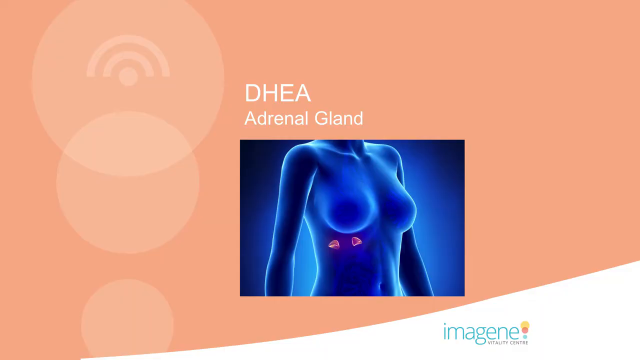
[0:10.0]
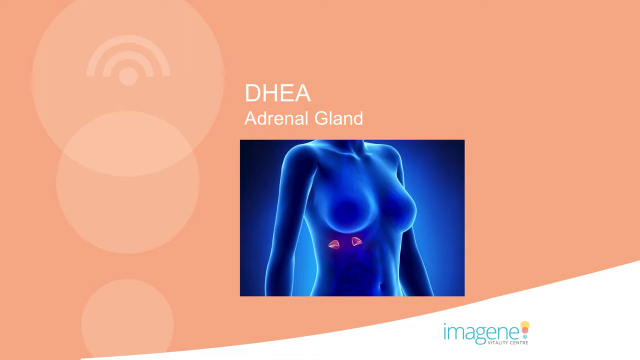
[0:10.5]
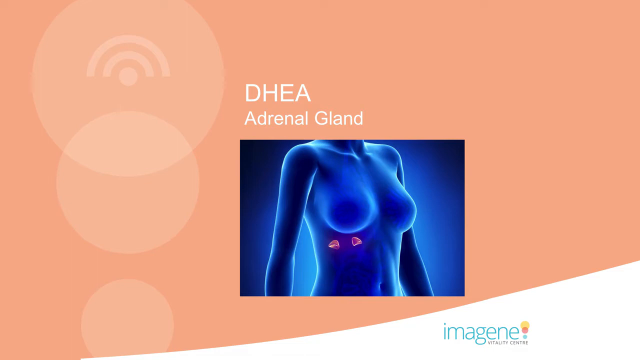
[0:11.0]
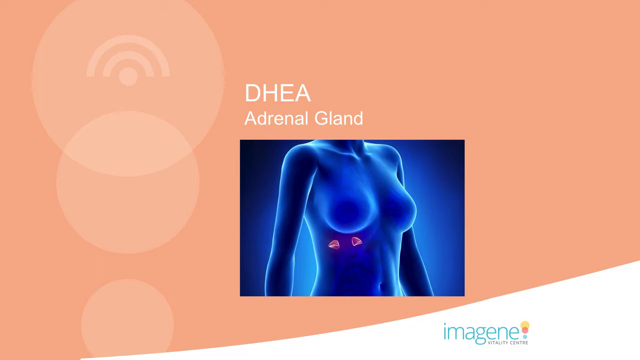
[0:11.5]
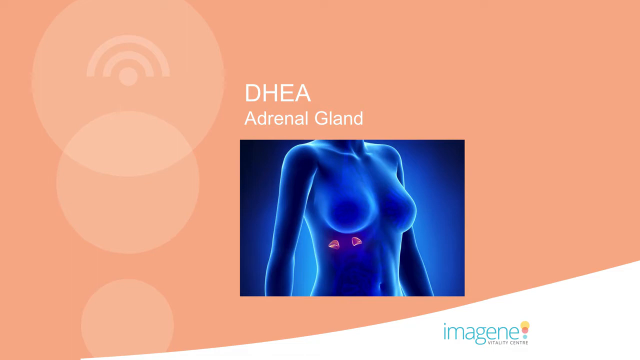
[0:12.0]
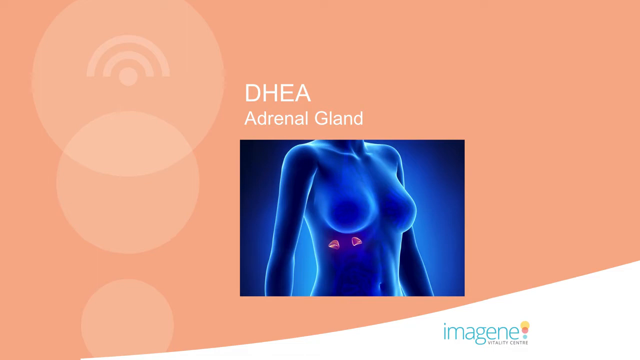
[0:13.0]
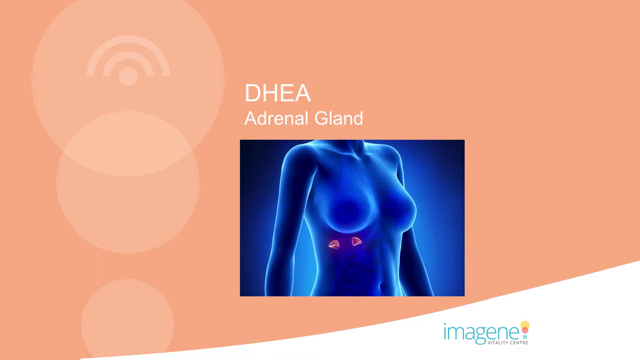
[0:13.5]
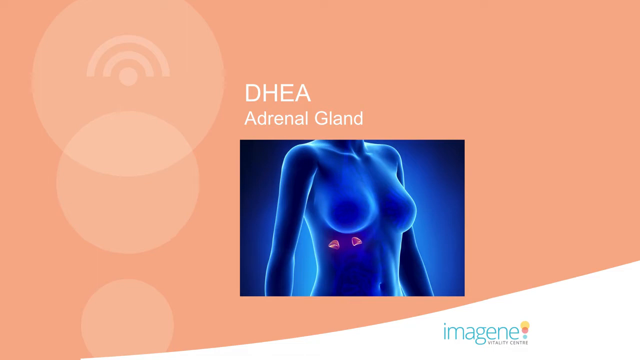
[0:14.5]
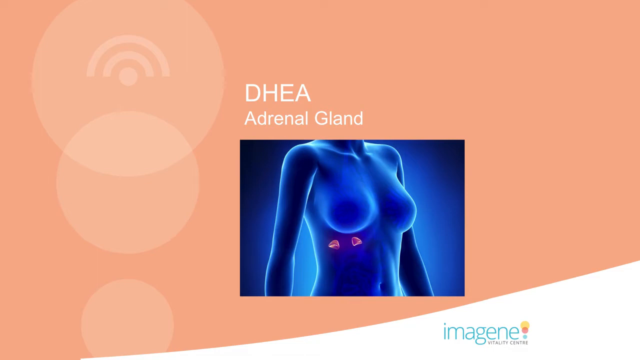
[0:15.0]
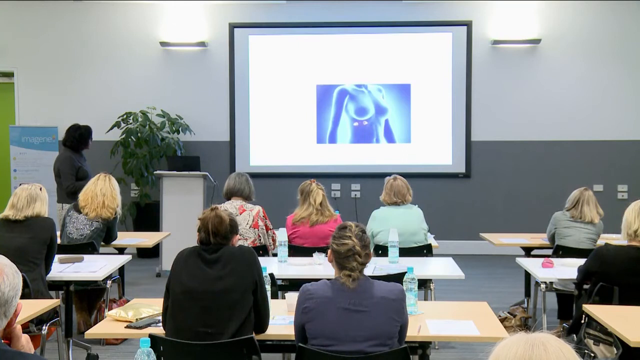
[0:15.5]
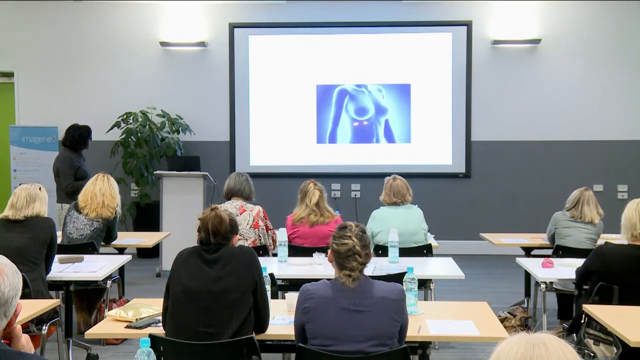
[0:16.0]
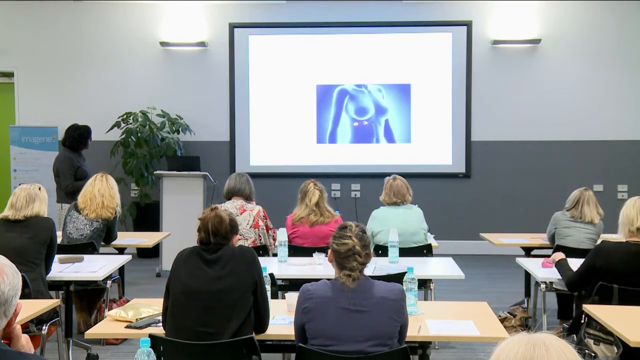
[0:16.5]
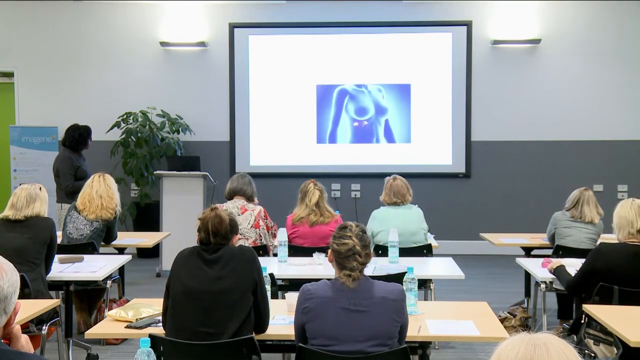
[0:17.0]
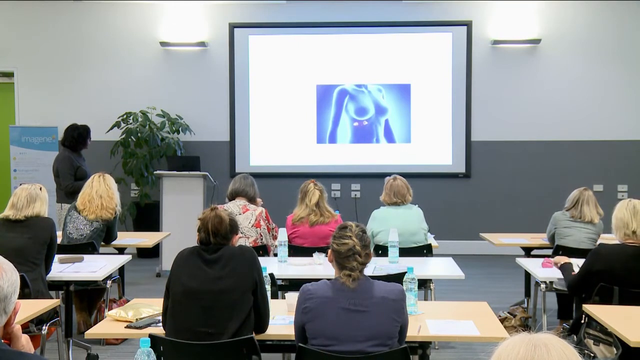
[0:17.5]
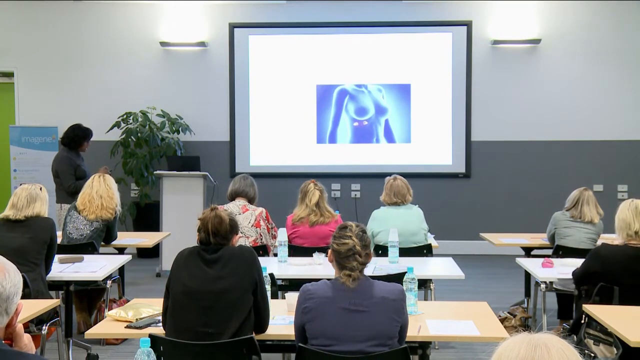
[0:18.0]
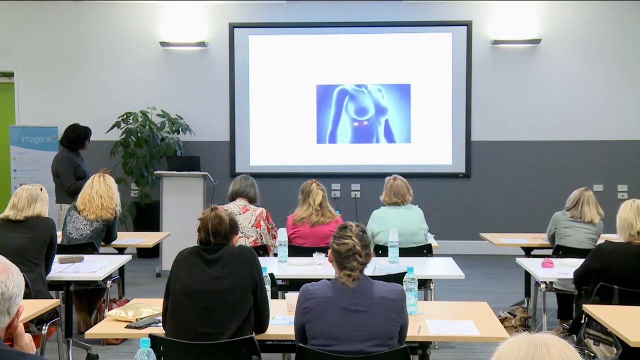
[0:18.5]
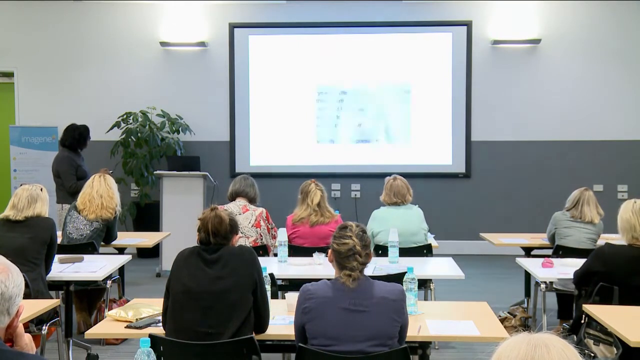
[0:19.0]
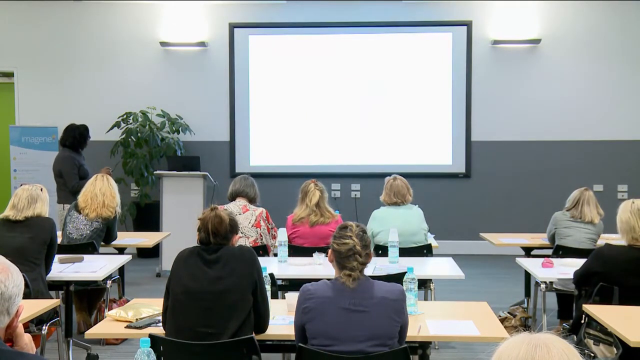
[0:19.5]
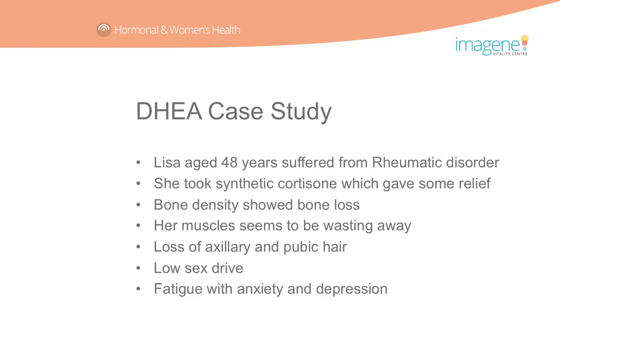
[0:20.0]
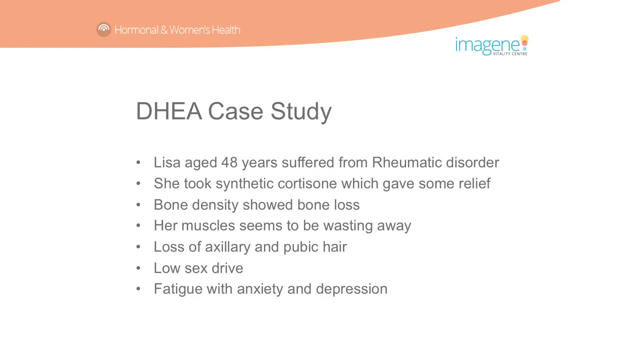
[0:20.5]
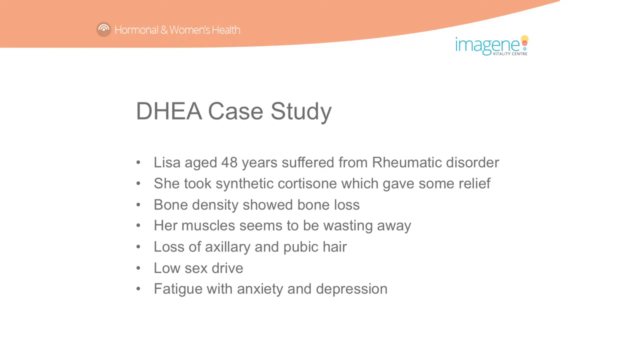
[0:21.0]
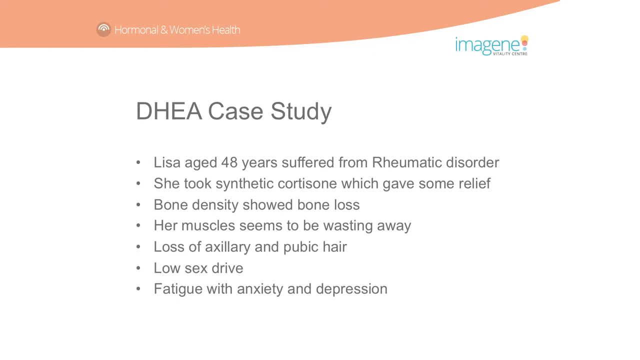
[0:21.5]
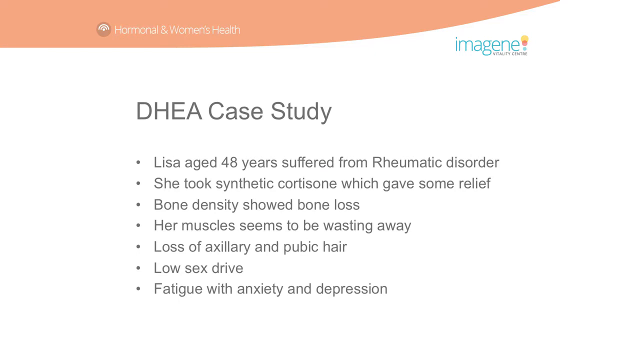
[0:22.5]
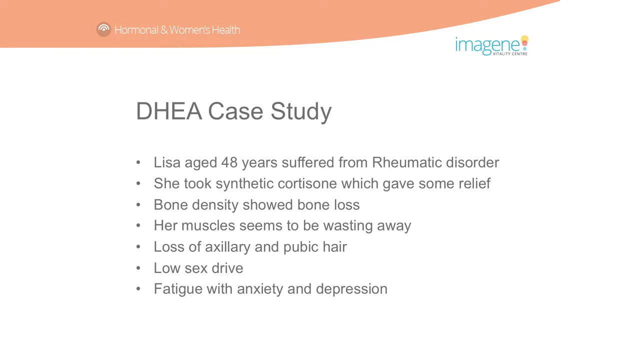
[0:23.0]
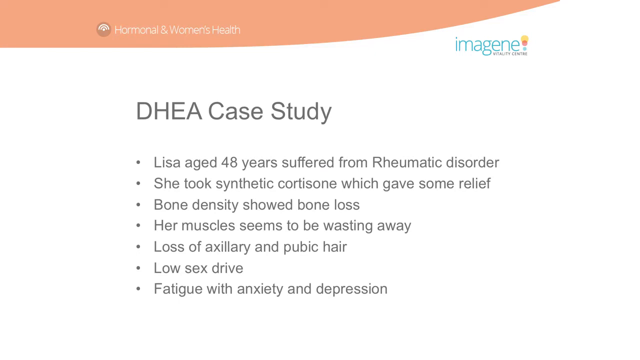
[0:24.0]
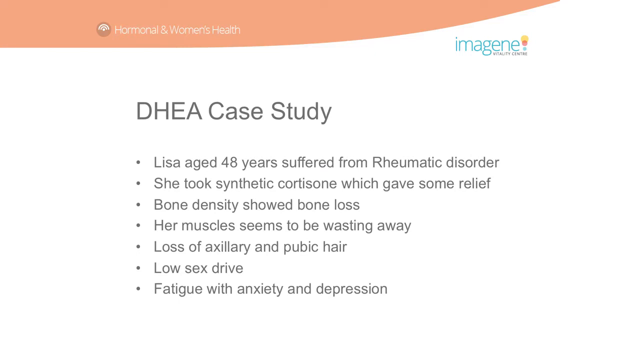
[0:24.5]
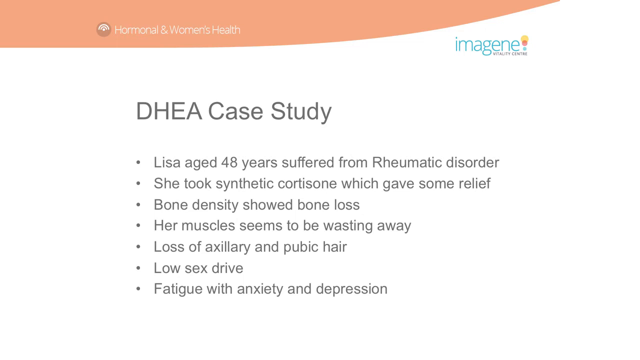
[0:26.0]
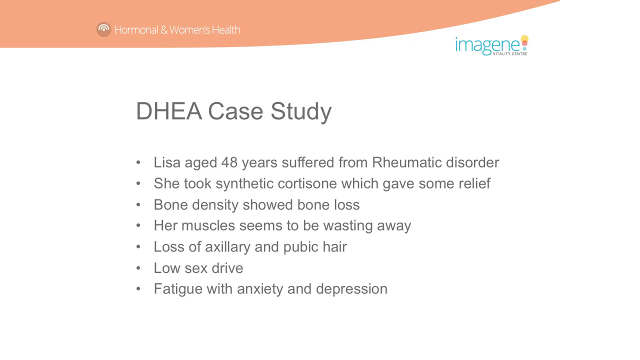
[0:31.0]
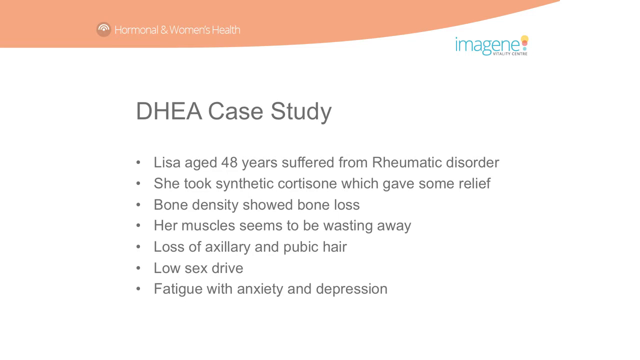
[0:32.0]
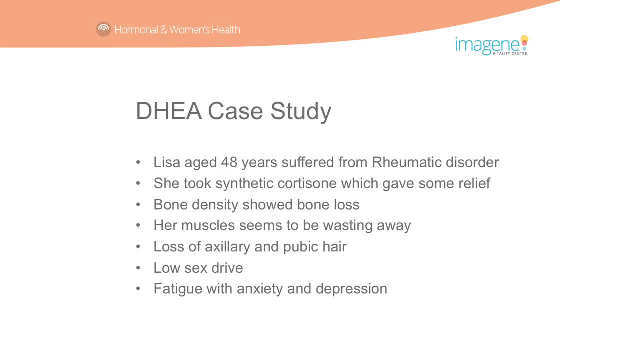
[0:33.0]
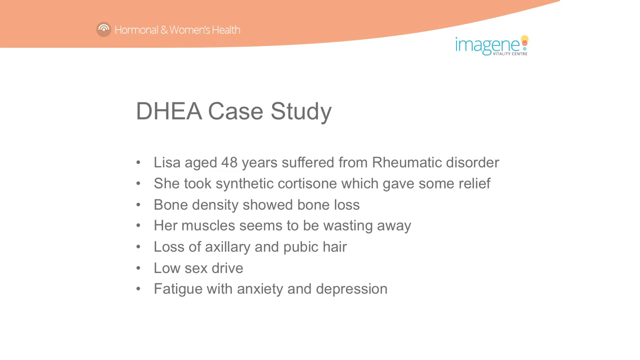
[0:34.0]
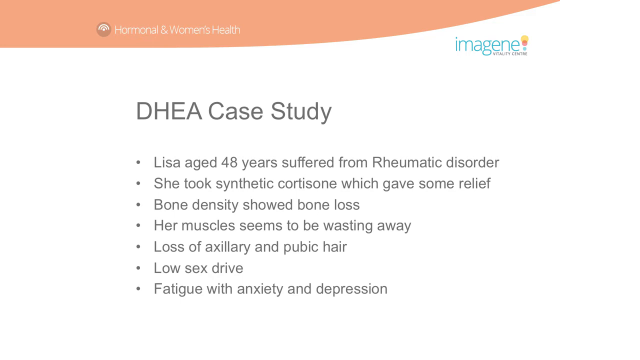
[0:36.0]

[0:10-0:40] A slide reads "DHEA" with "adrenal gland" under it, in all capital letters, alongside an image of a woman's upper body. At the bottom are the letters "IMAGENE". The view zooms out to show the doctor presenting on a big PowerPoint screen. In the back there appear to be all women, at desks. The top part of the room's wall is white and the bottom part is gray. The doctor holds a clicker to advance the slides, and there is text in the upper left-hand corner. Then a white slide reads "DHEA case study" in dark gray, with bullet points: "Lisa, age 48, suffer from rheumatic disorder", that she took synthetic cortisone, which gave her some relief, "bone density showed bone loss", "her muscles seem to be wasting away", loss of pubic hair, "low sex drive", and "fatigue with anxiety, and depression". This slide stays up for a while.